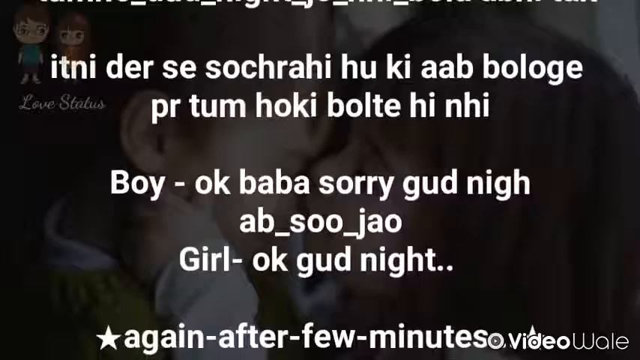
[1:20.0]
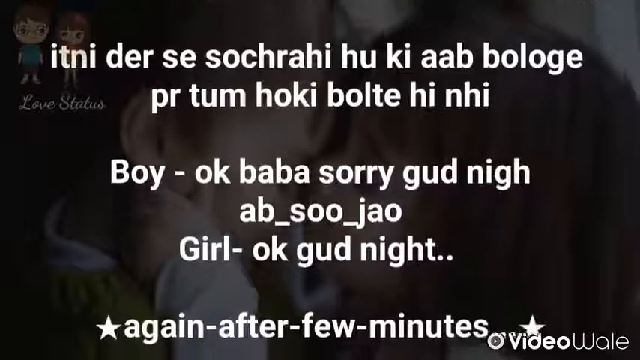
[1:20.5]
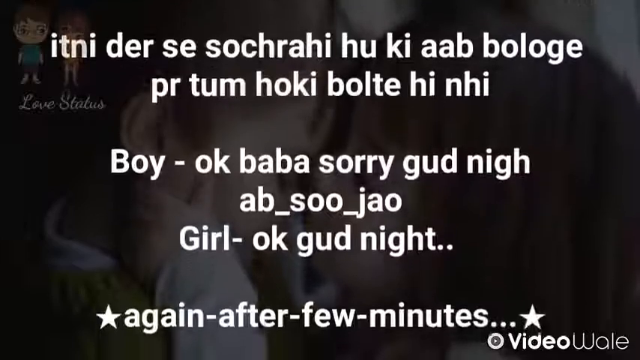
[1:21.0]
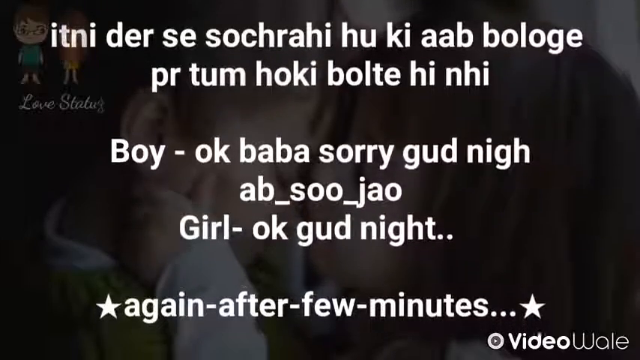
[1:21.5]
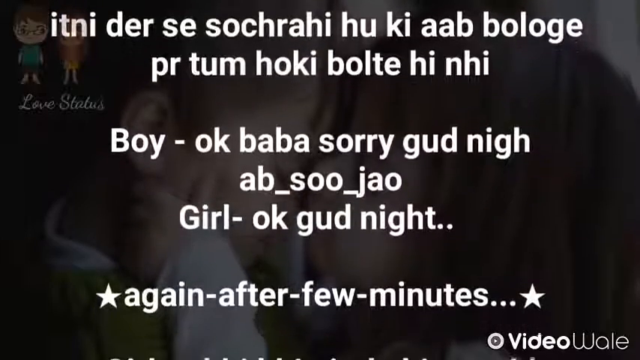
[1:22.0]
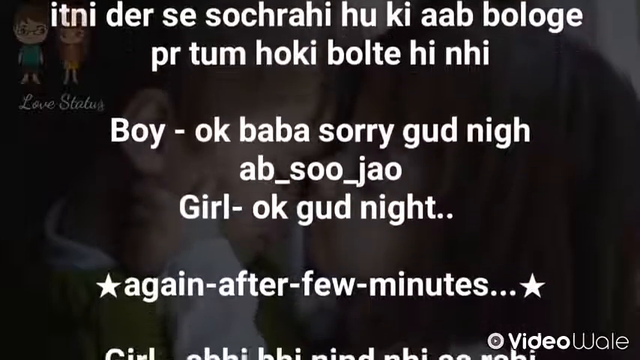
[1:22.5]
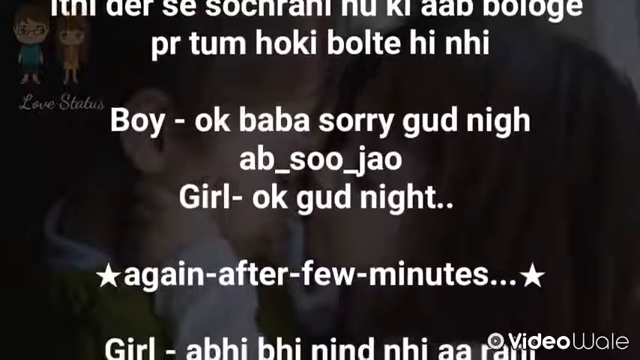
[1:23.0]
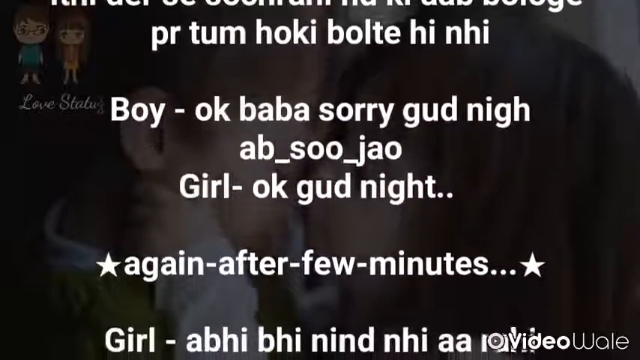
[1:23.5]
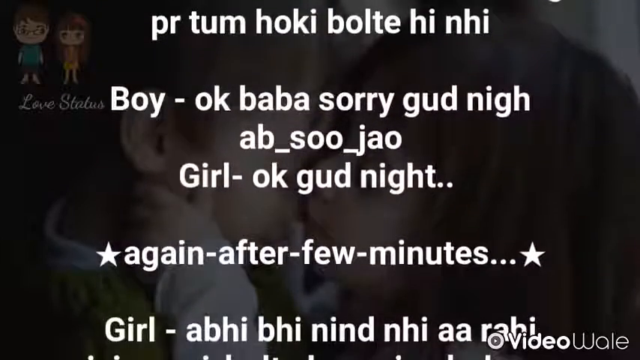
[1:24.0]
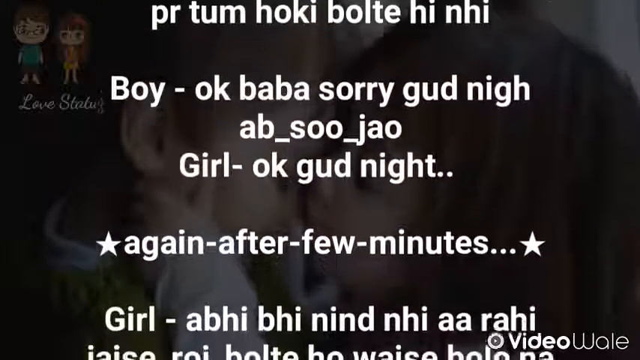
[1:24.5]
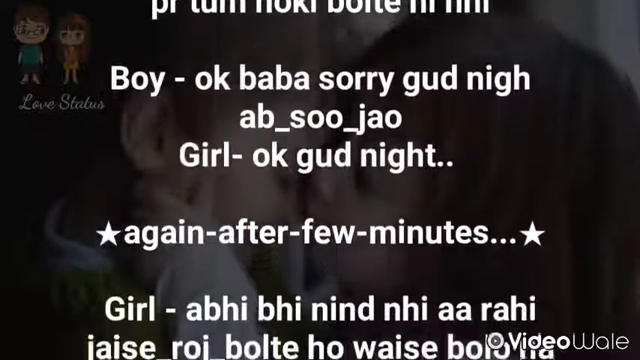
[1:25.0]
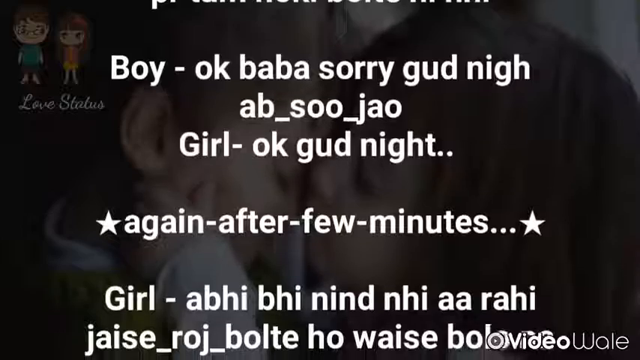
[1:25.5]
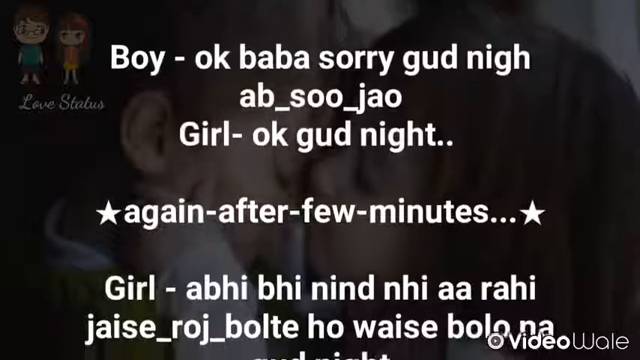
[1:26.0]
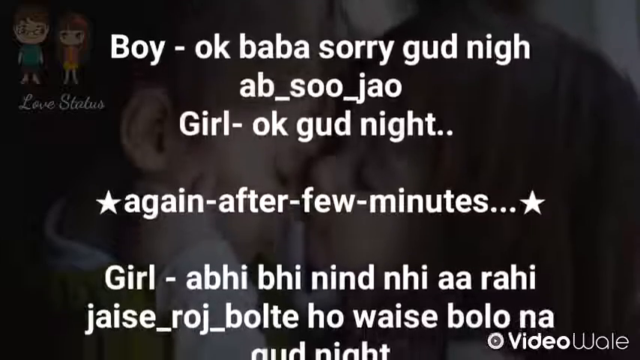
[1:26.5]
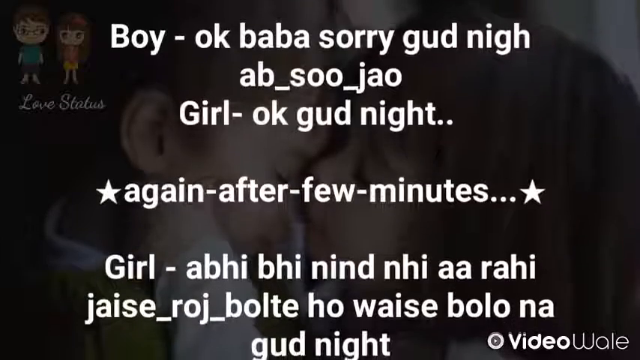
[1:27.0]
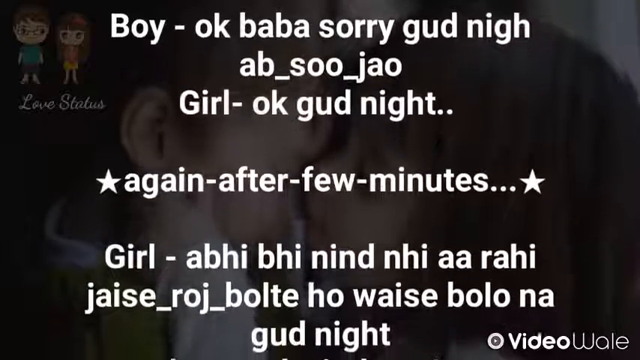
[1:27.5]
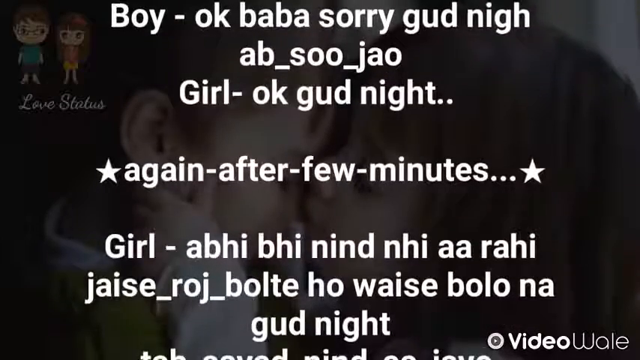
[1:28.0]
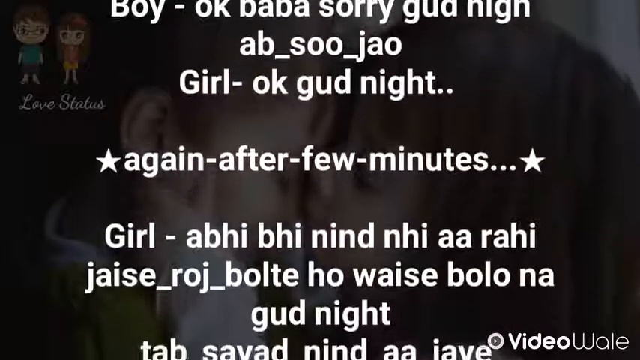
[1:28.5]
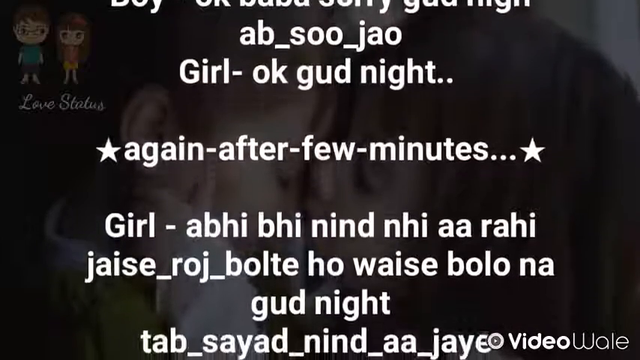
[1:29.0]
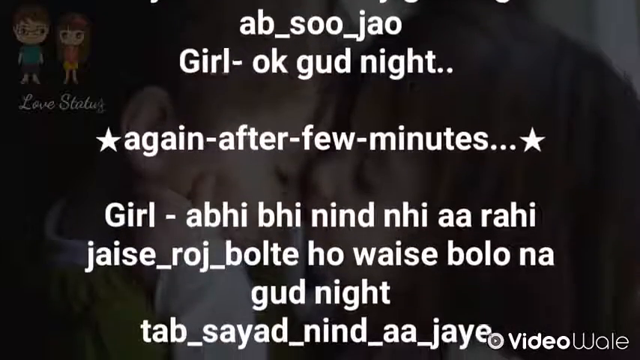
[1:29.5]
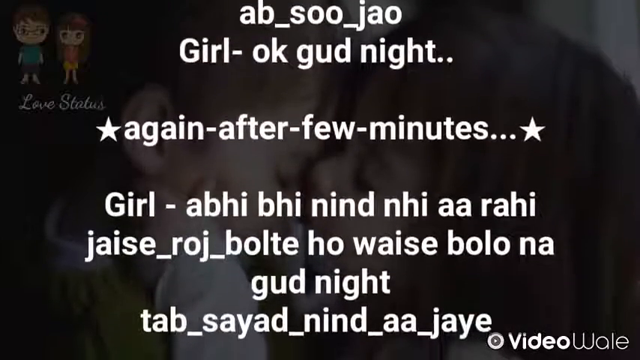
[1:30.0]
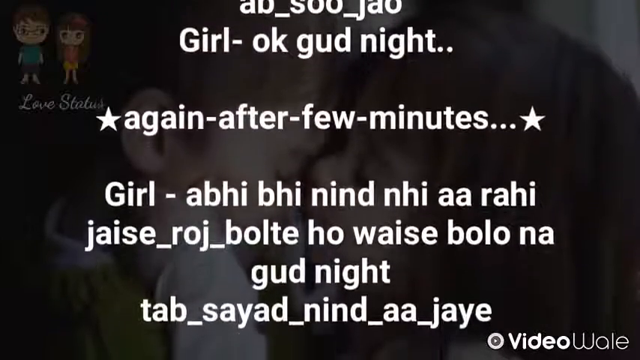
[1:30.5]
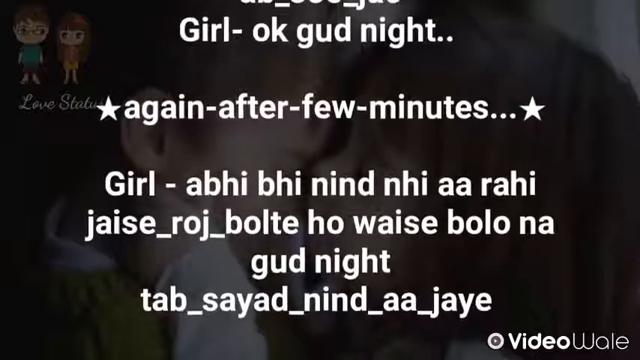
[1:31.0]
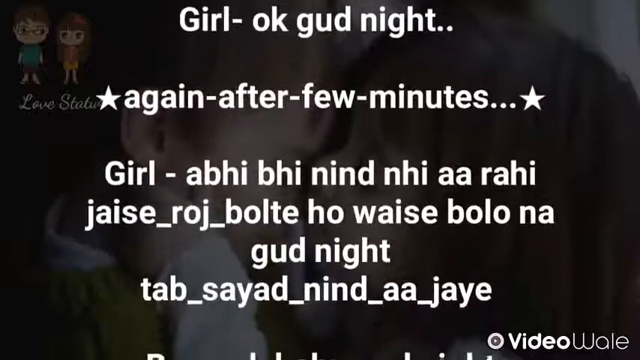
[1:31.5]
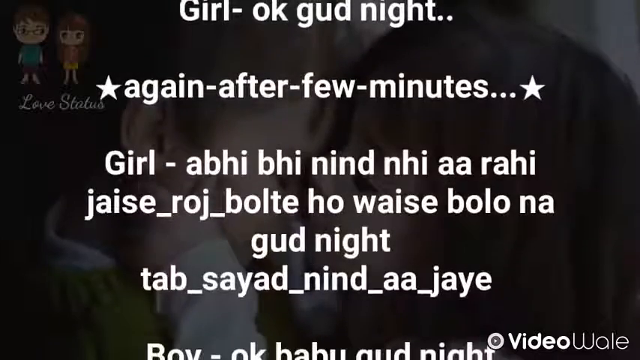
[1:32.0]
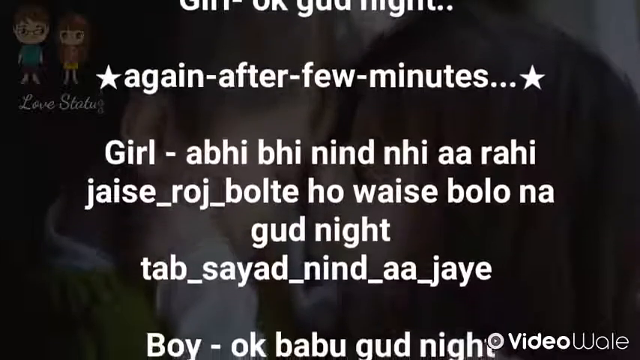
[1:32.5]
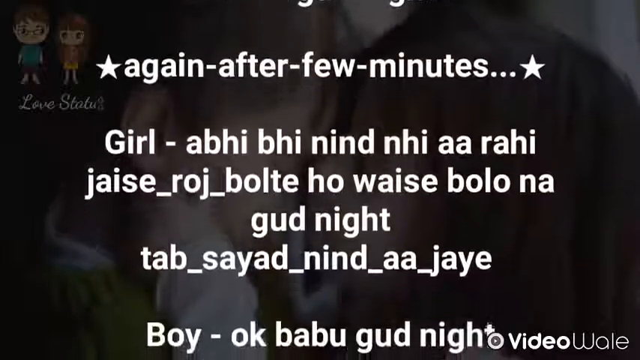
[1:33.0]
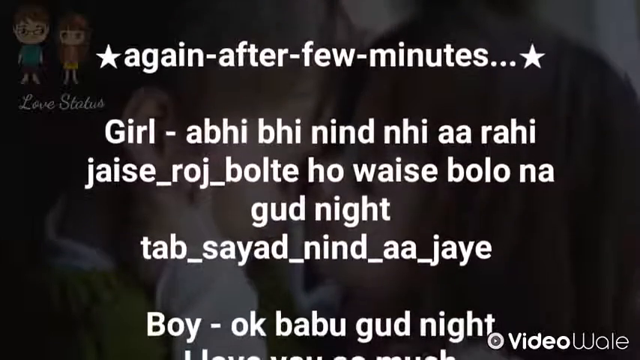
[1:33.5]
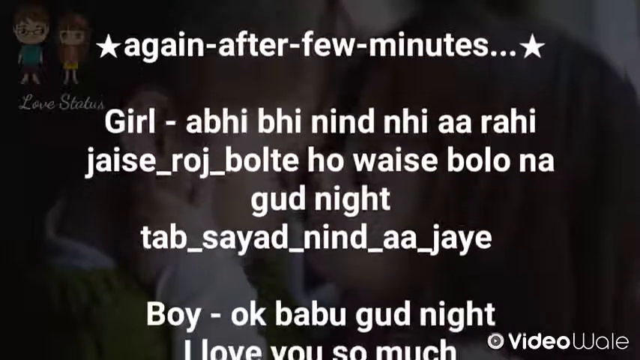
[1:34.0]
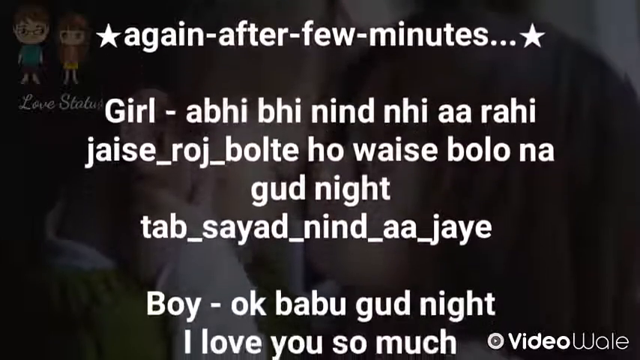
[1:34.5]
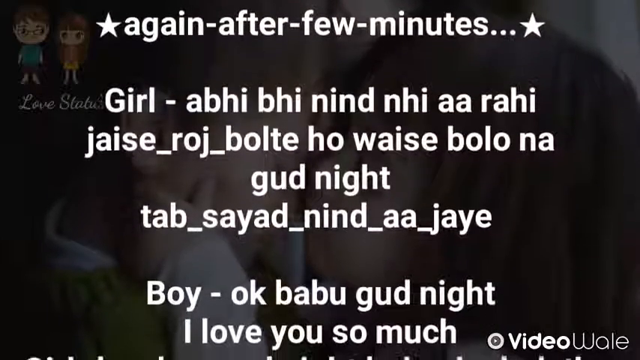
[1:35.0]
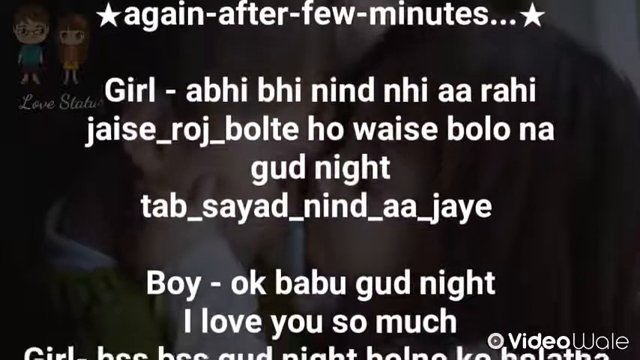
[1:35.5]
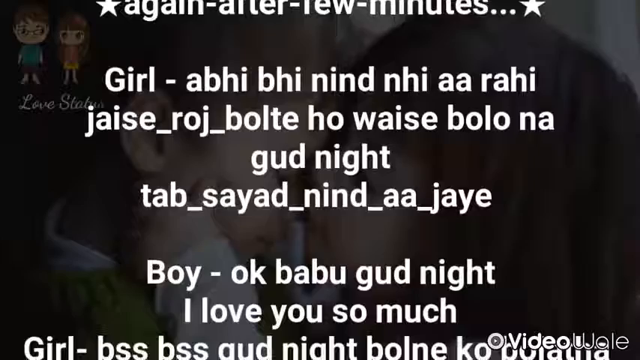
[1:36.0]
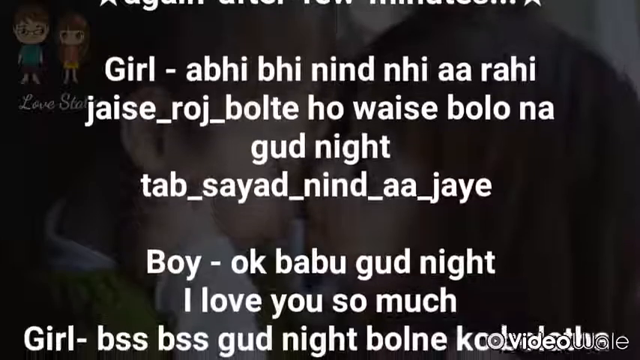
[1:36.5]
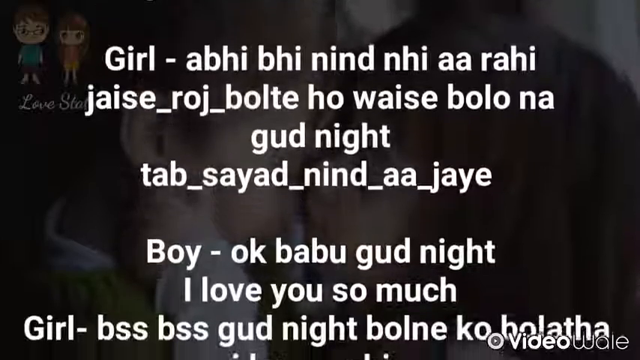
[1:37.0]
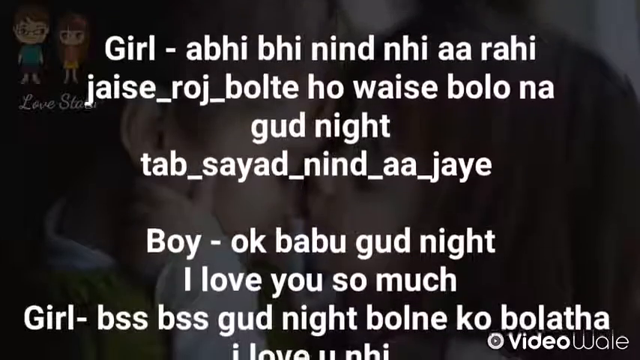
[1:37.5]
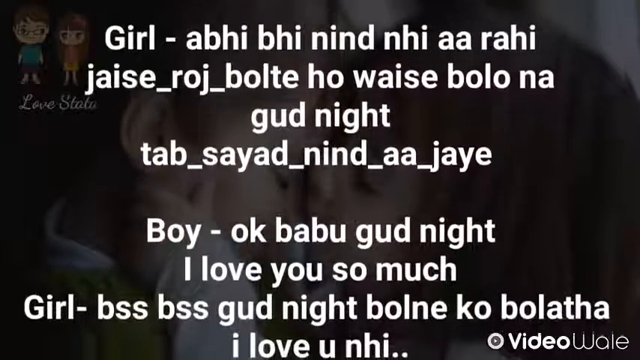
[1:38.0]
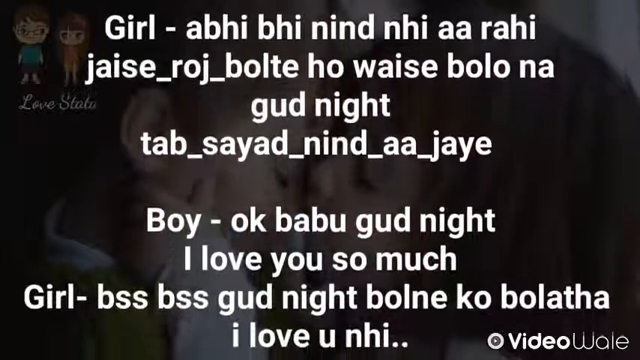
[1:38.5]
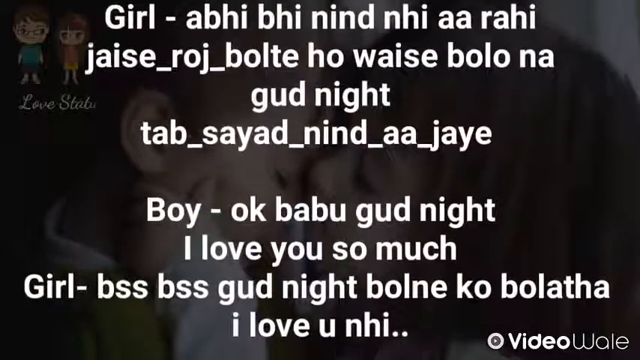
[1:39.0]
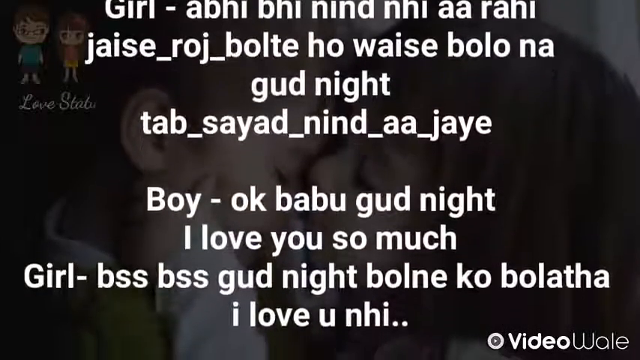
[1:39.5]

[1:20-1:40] The background is the same image of a young girl on the right and a young boy on the left, both with their eyes closed and appearing to sleep. The left side of the girl's face is visible; she has white skin and dark brown hair, and her left arm and hand are on the boy's face. The boy also has white skin and short brown hair. In the top left is a drawing of a young boy and a young girl. The drawn boy has white skin, glasses, short brown hair, a bluish shirt and dark bluish shorts. The drawn girl, to the right in the drawing, has the same dark brown hair and an orange shirt. Bold white text in a foreign language slowly moves upward toward the top of the screen. It repeatedly mentions "girl" and "boy", apparently subtitles of what the young boy and girl are saying to each other.